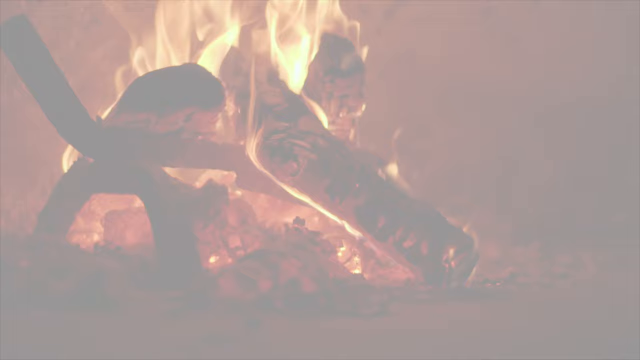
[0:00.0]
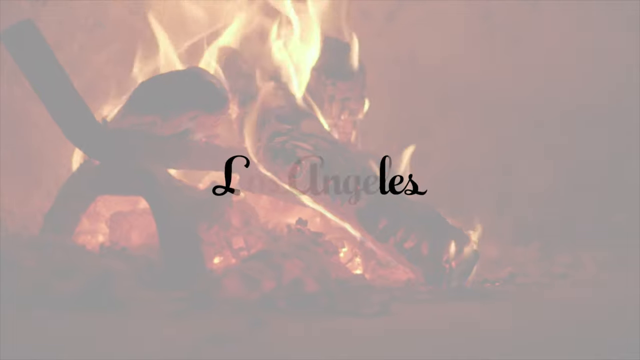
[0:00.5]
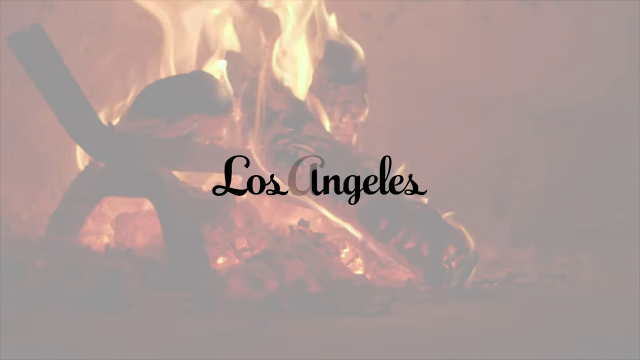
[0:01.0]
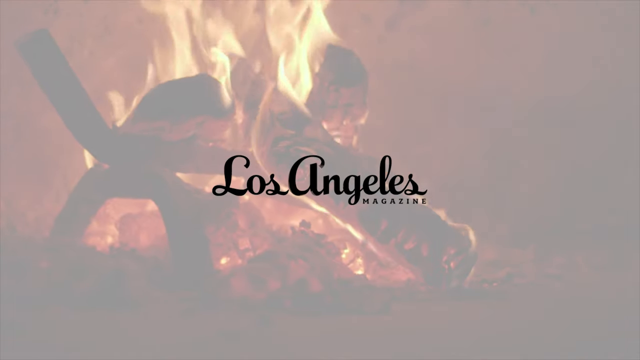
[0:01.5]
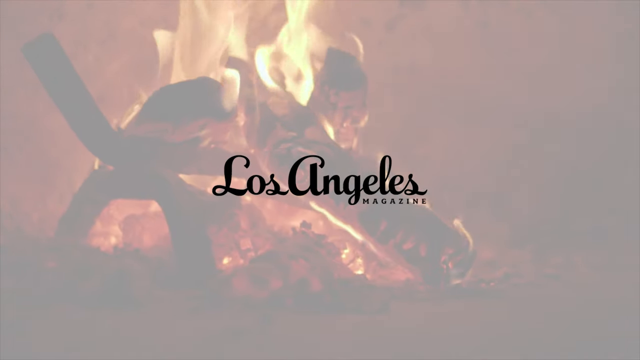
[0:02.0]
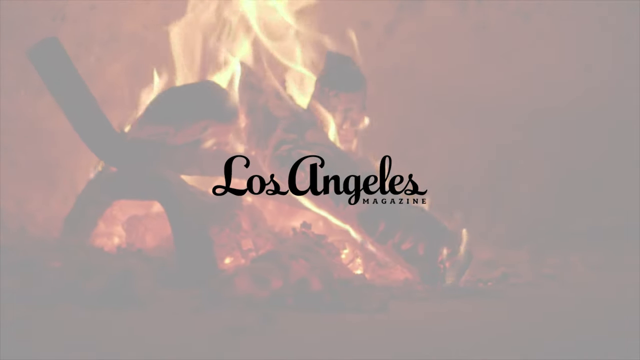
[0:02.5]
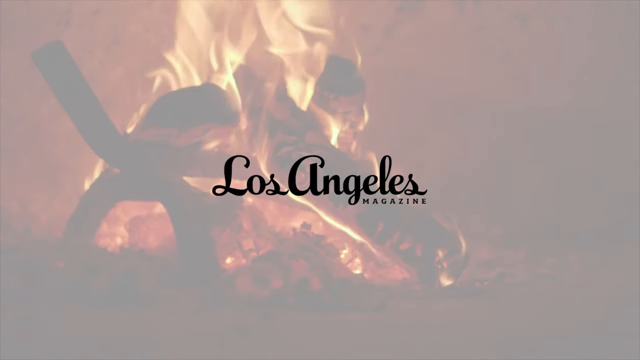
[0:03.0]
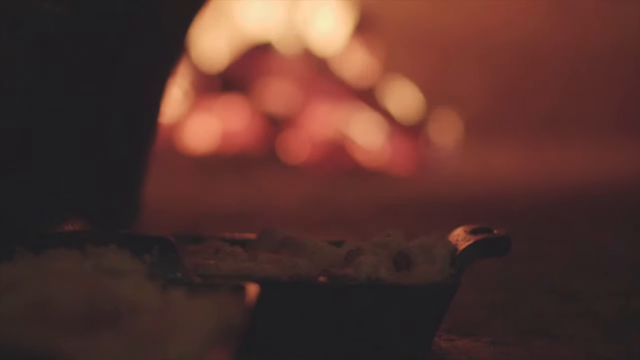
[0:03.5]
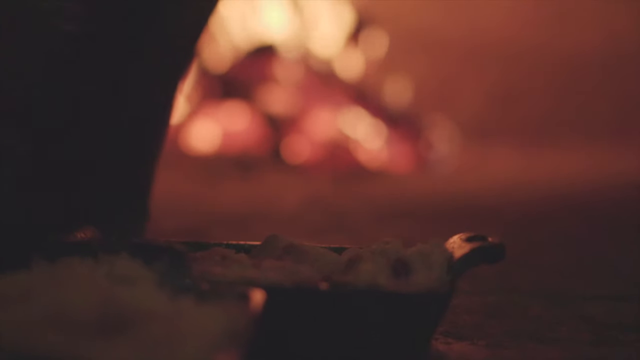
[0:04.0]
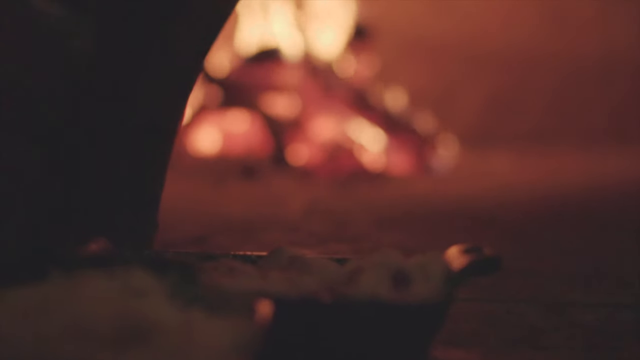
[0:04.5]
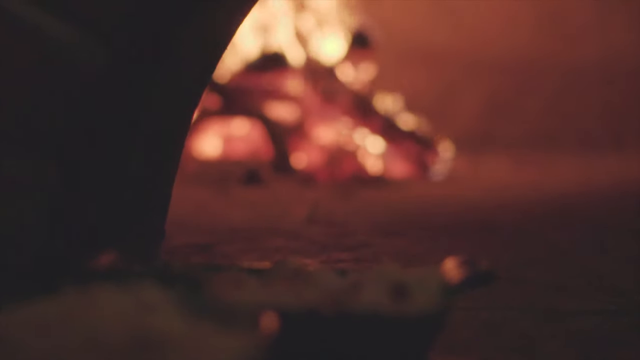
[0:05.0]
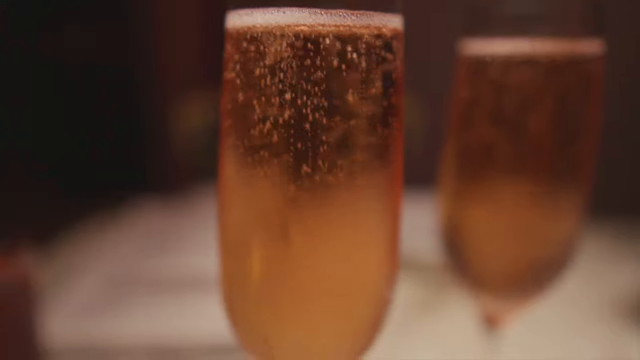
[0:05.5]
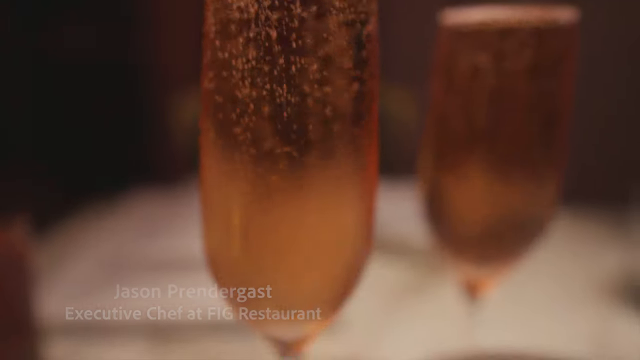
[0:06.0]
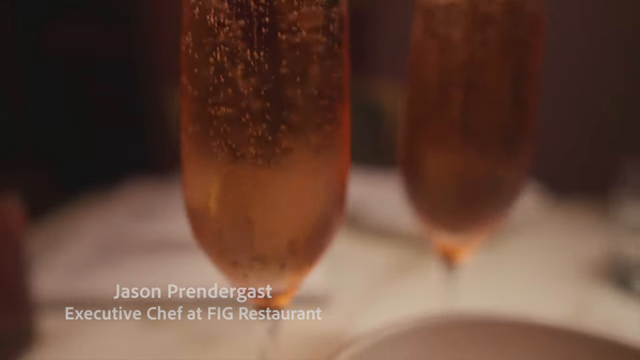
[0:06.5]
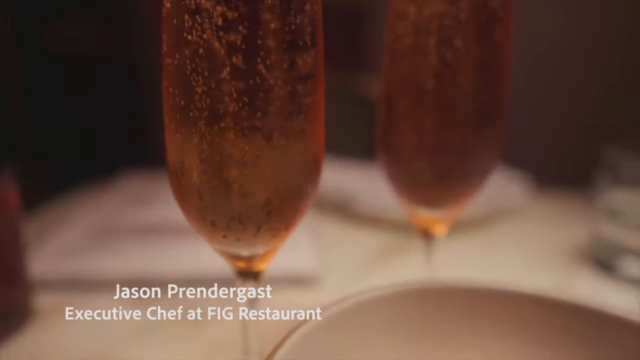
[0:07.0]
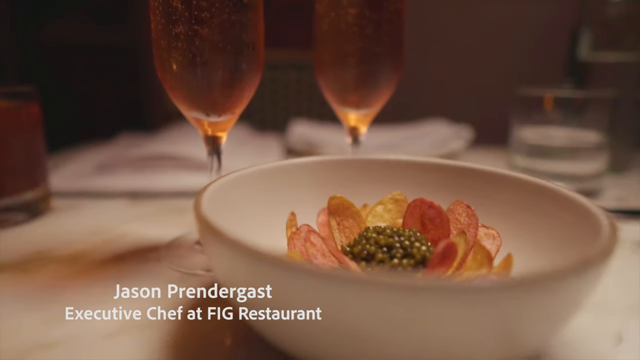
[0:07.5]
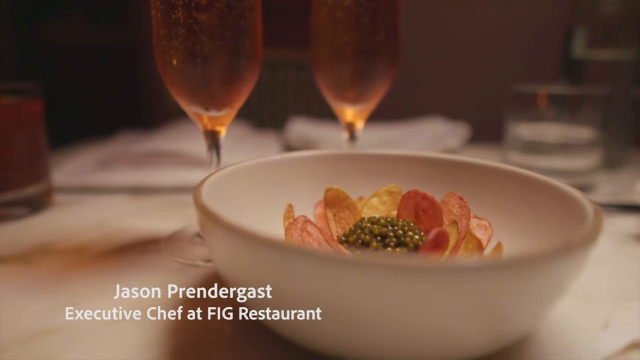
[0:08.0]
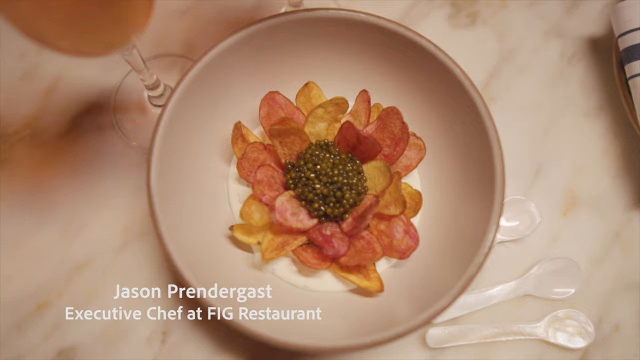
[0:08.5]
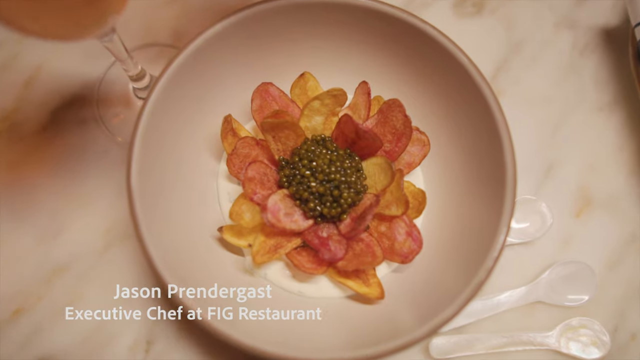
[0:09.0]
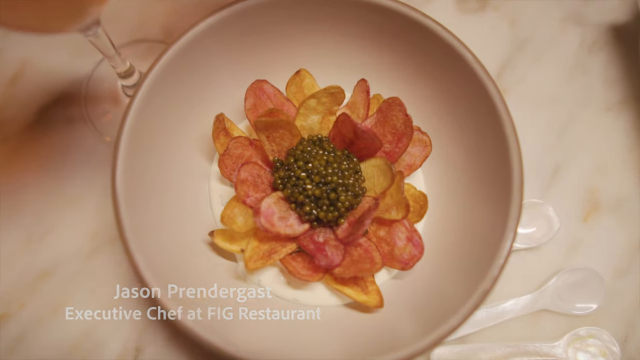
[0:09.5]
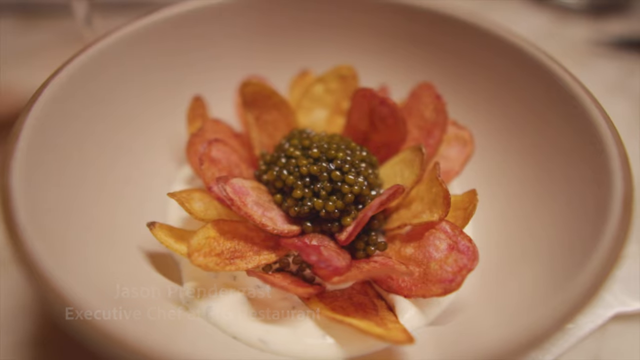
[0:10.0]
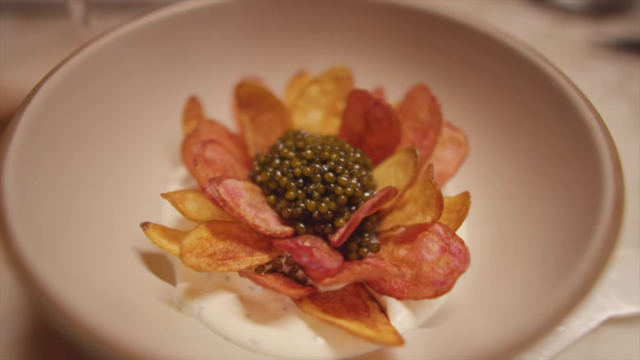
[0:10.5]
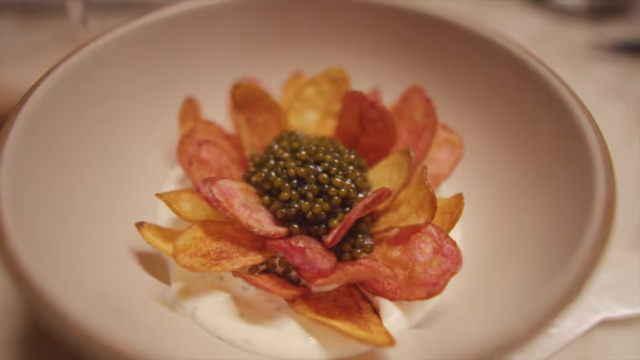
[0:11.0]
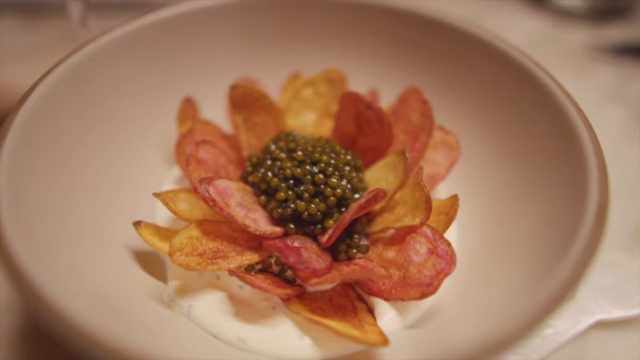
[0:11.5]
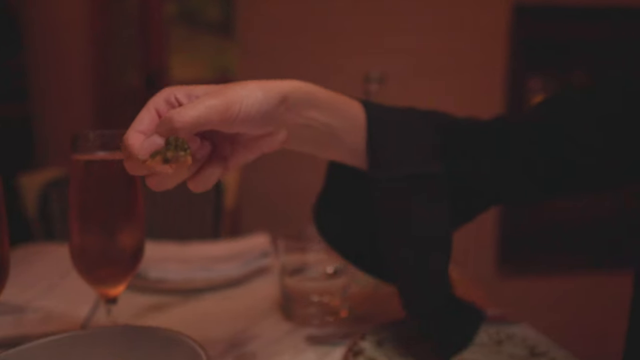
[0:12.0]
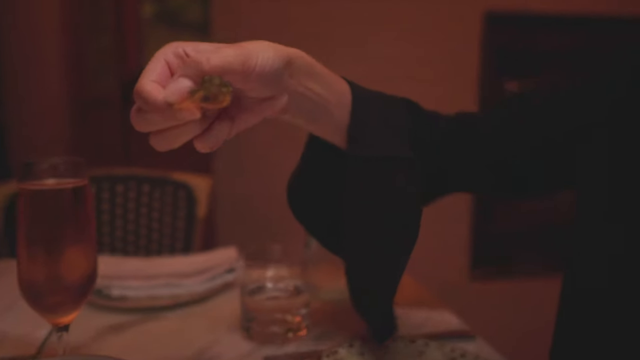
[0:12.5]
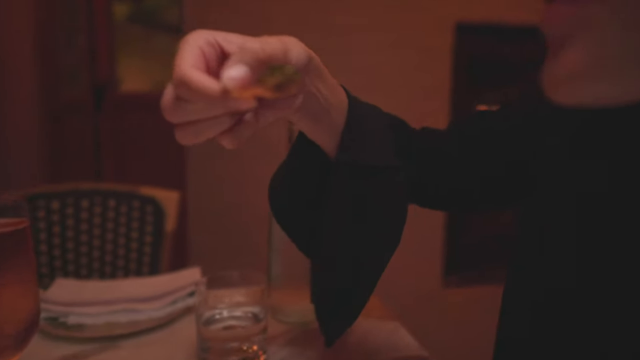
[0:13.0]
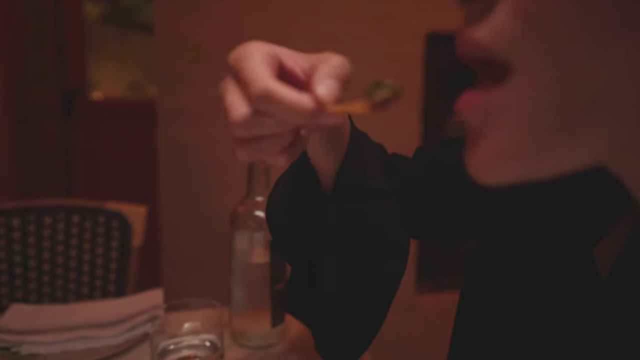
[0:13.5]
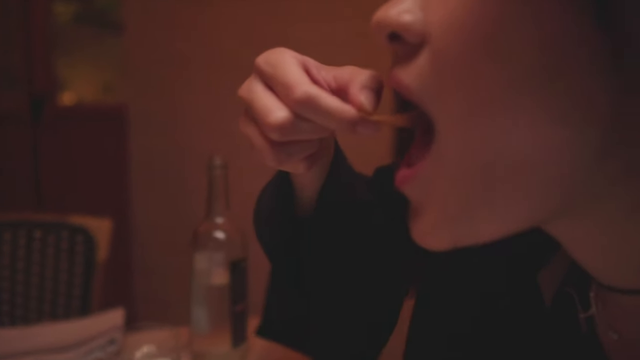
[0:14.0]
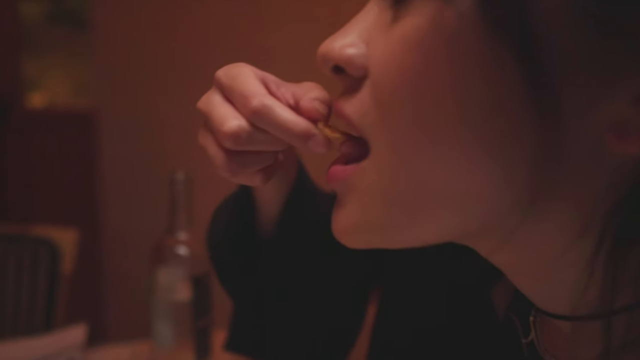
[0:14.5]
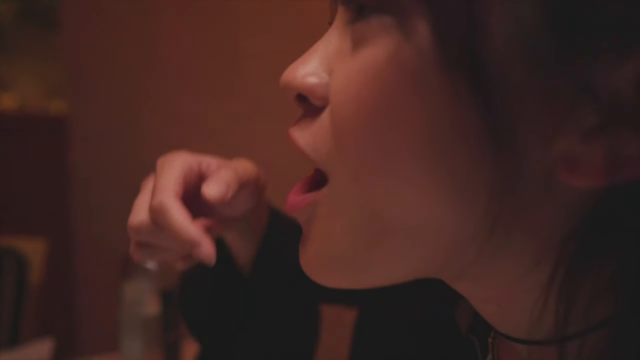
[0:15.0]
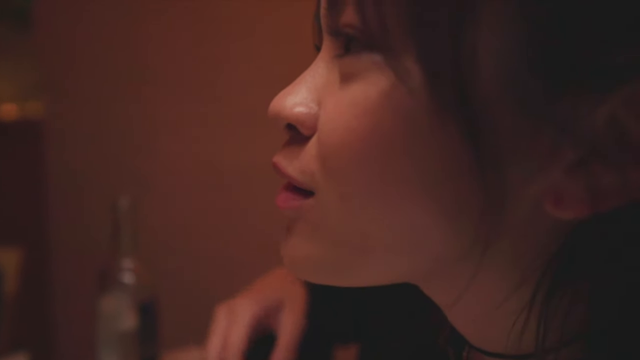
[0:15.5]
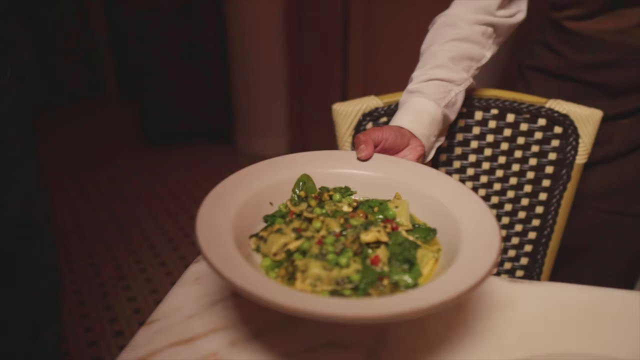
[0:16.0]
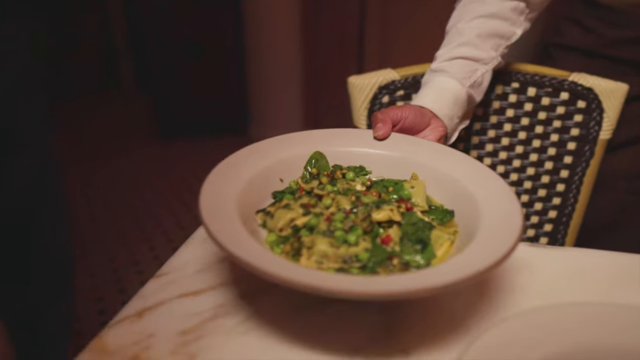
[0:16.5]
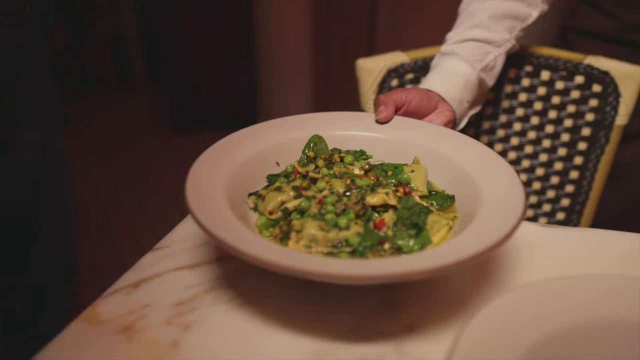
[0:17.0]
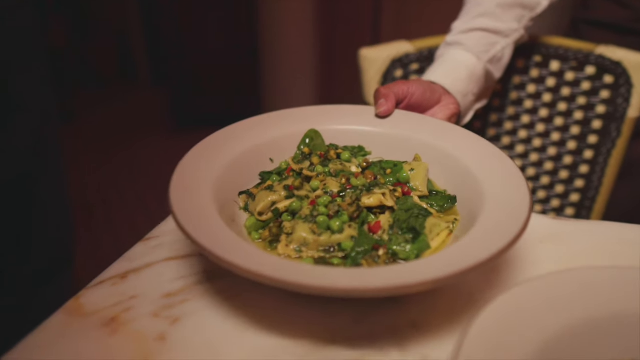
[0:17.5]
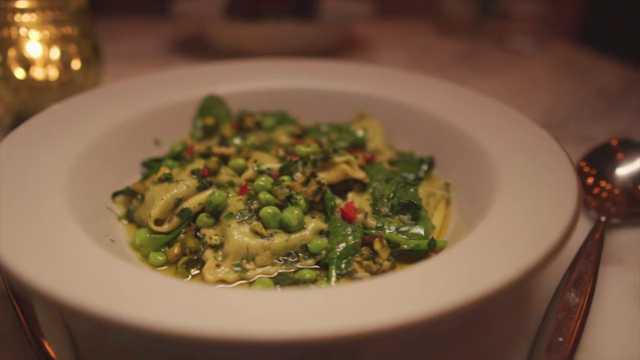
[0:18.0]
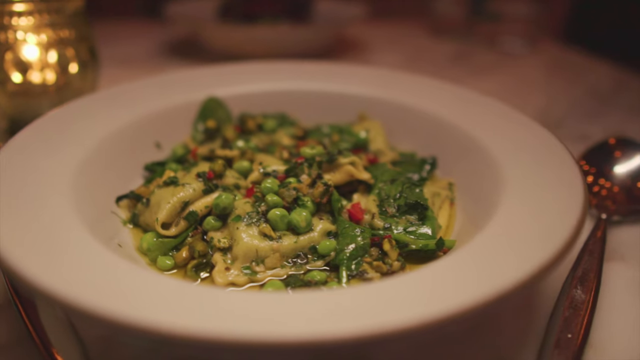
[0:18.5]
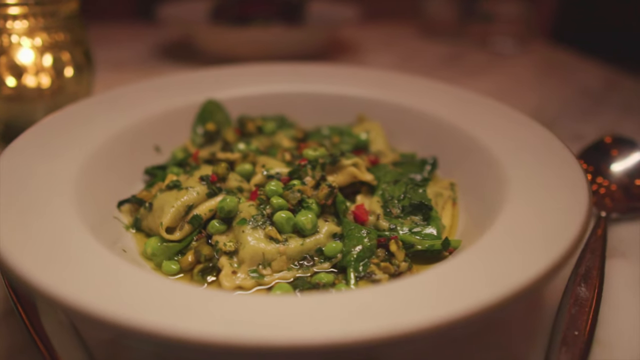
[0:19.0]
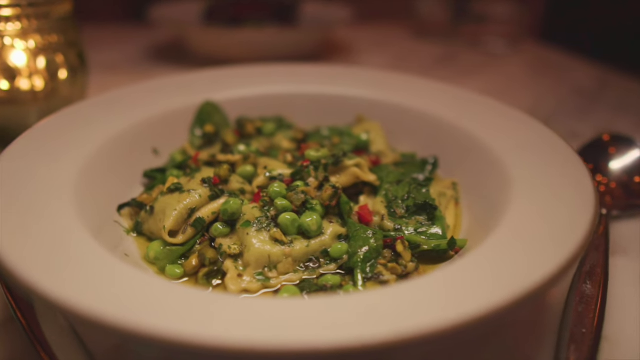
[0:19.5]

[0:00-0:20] The video opens on what appear to be logs burning in a fireplace, and then the words "Los Angeles magazine" appear in black text. A somewhat cinematic shot shows a fire in a fireplace. Next come two glasses of champagne with bubbles rising in them, along with a name: "Jason Prendergast executive chef at Fig restaurants." A bowl, apparently holding a flower, possibly with caviar at the center, is next to the two glasses of champagne. An overhead shot of the dish shows that it looks formed to resemble a flower with caviar at the center. A side shot then shows it more clearly, revealing red and yellow colors. Someone in a black shirt, apparently a woman, uses her right hand to scoop up caviar with one of the petals and eat it. What appears to be a waiter in a white shirt then serves a salad, setting it on a table.